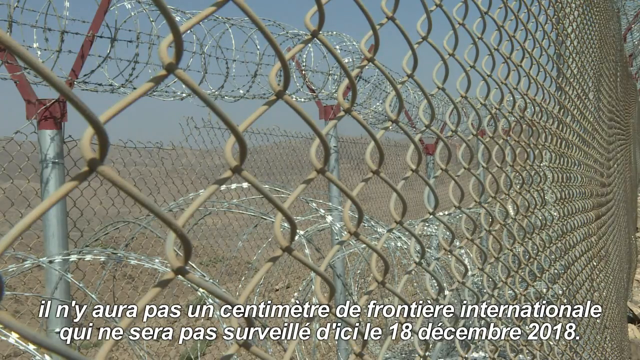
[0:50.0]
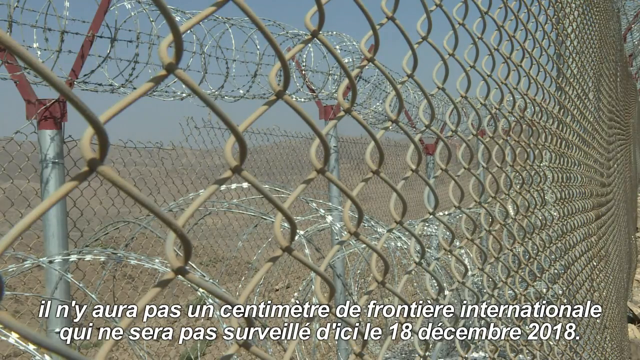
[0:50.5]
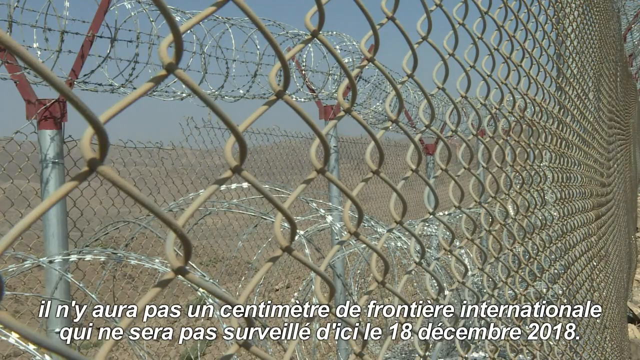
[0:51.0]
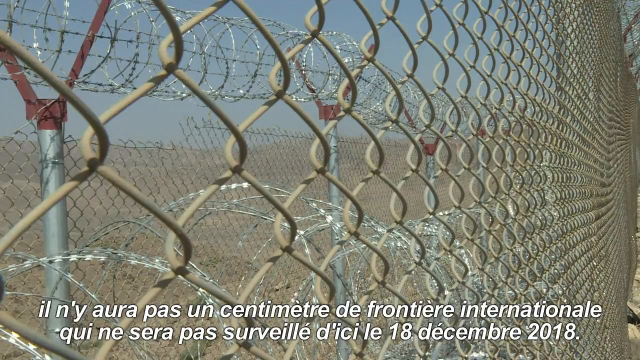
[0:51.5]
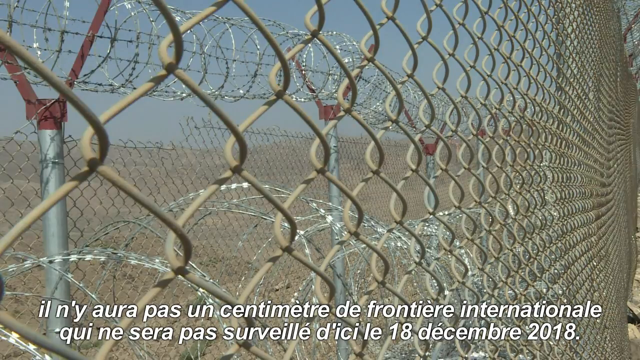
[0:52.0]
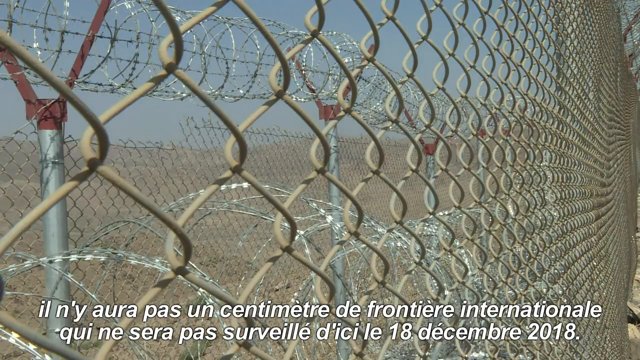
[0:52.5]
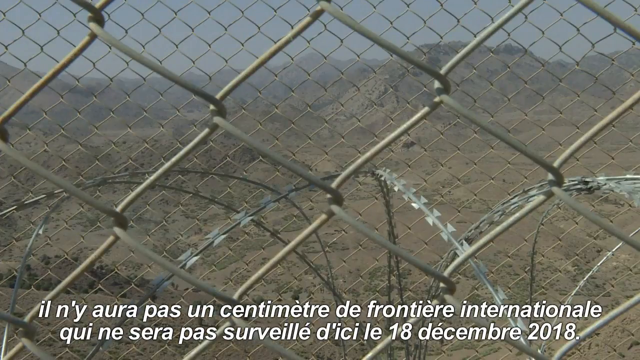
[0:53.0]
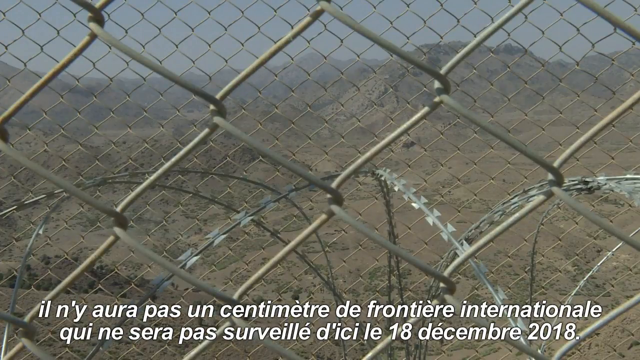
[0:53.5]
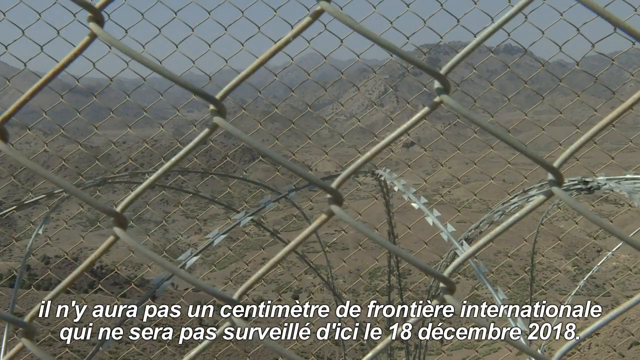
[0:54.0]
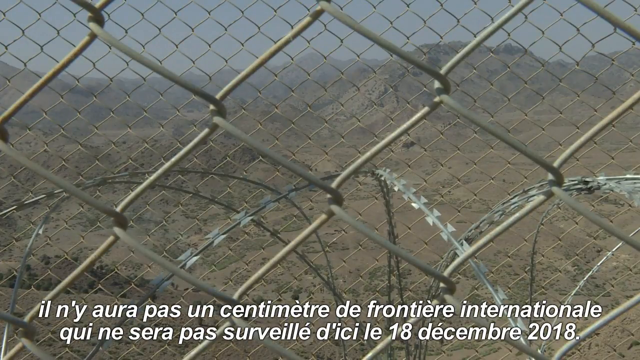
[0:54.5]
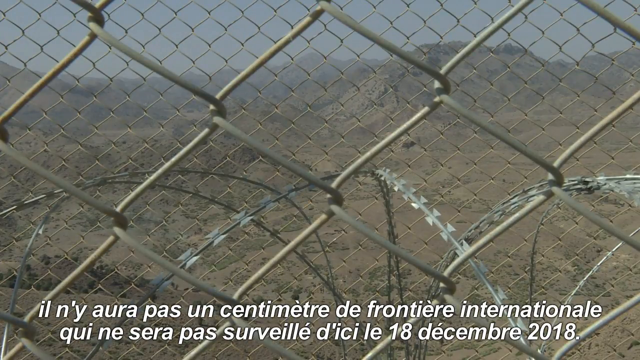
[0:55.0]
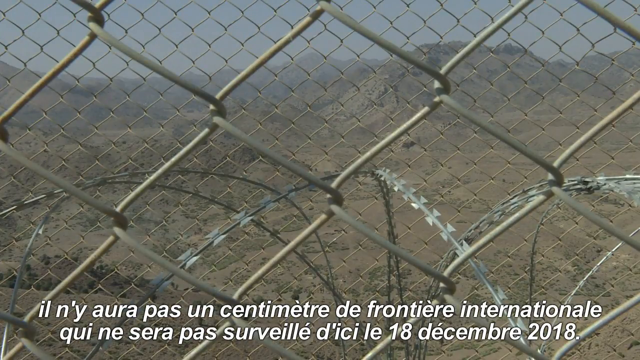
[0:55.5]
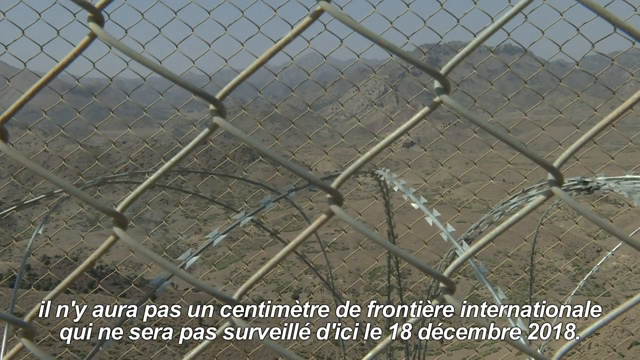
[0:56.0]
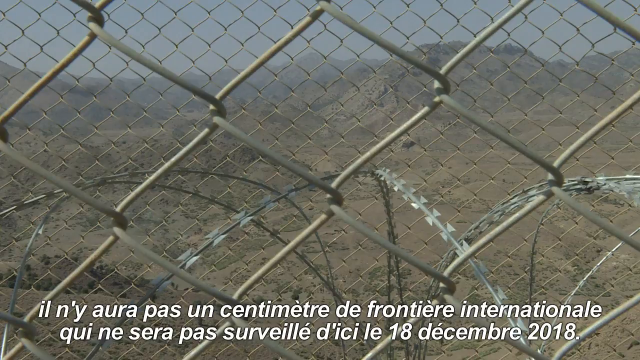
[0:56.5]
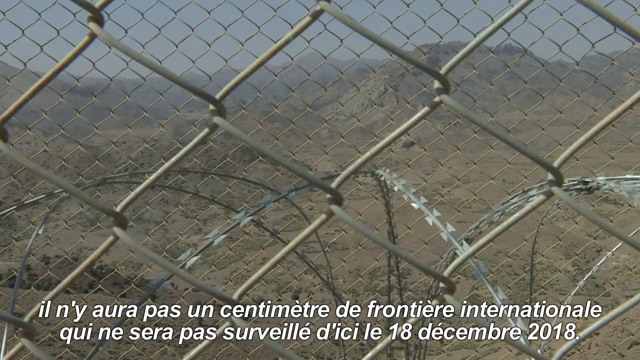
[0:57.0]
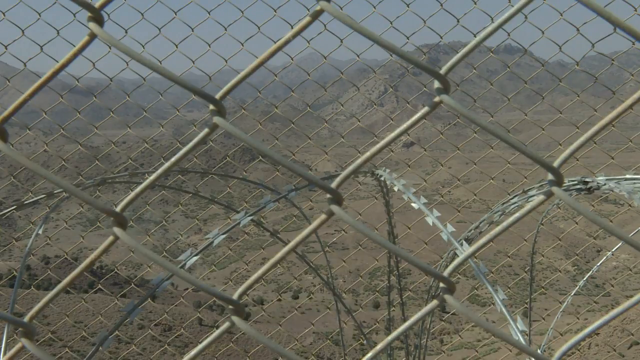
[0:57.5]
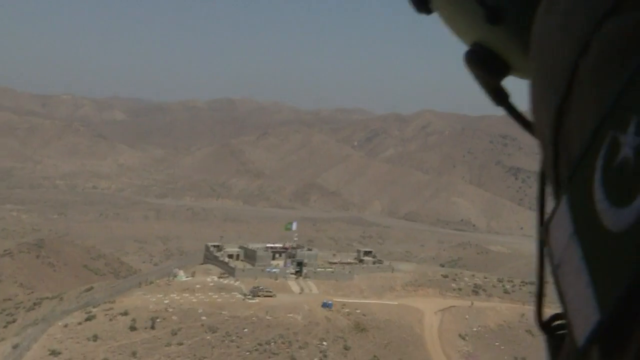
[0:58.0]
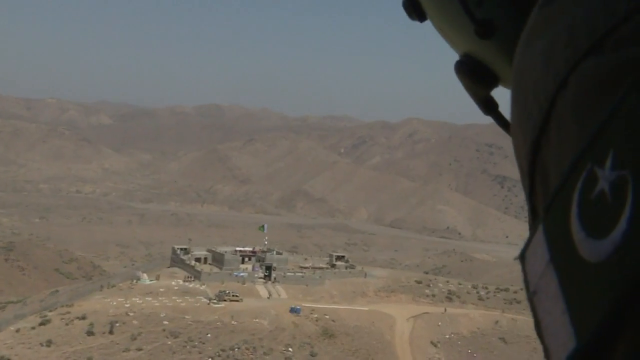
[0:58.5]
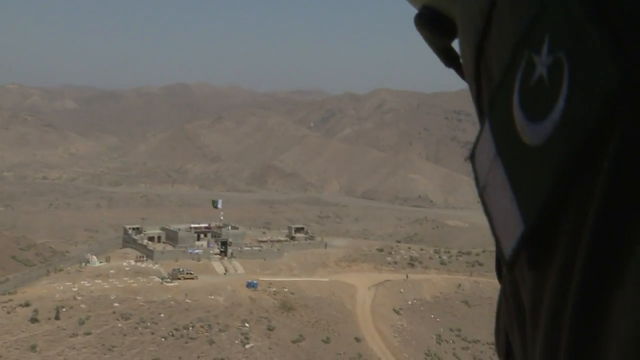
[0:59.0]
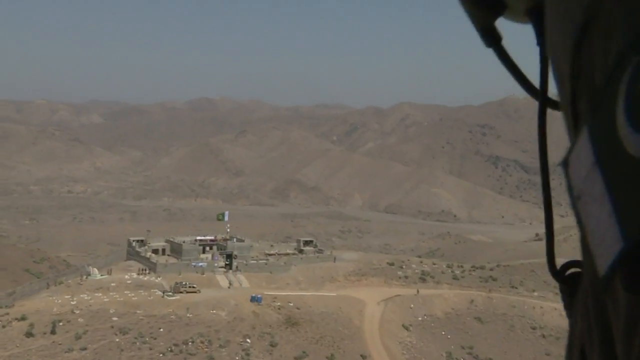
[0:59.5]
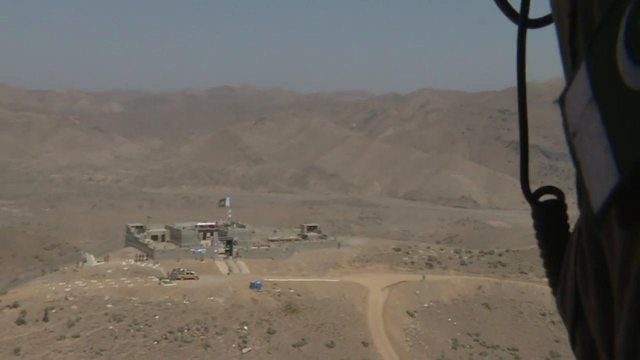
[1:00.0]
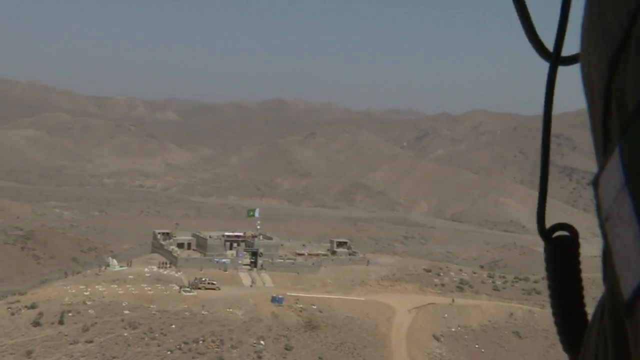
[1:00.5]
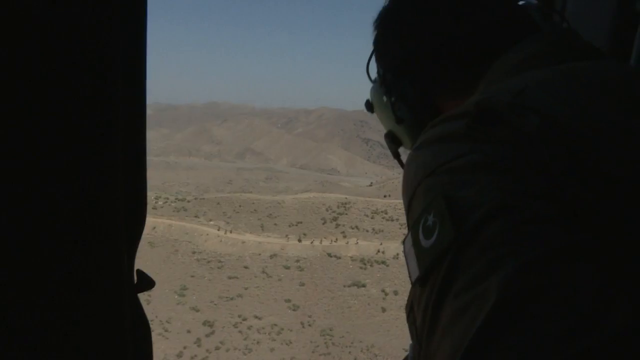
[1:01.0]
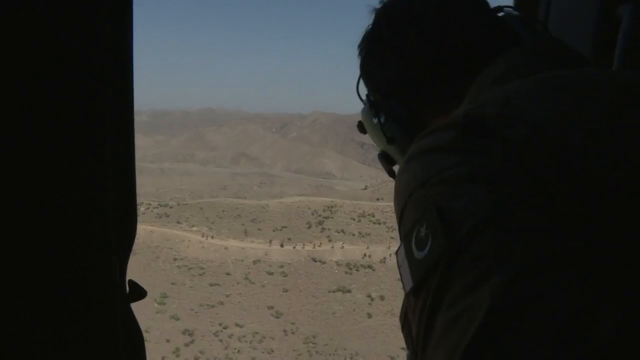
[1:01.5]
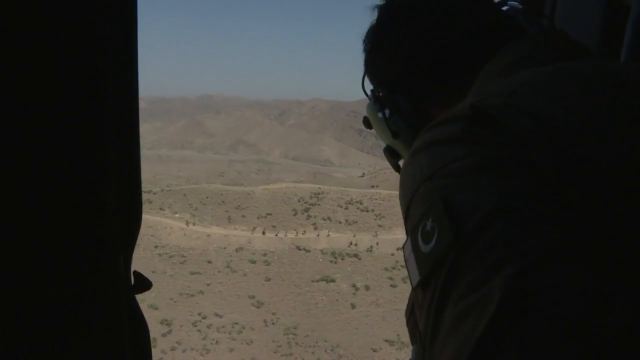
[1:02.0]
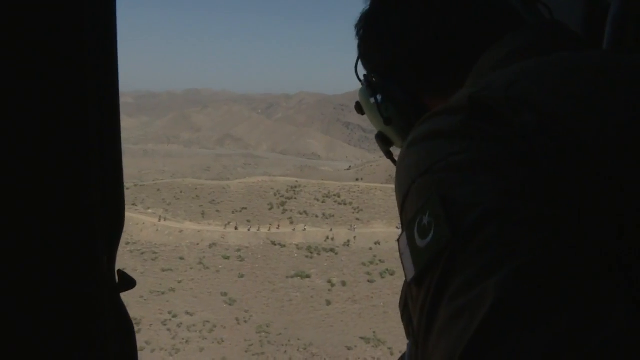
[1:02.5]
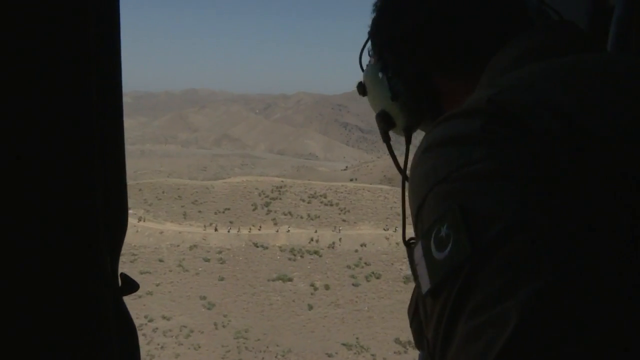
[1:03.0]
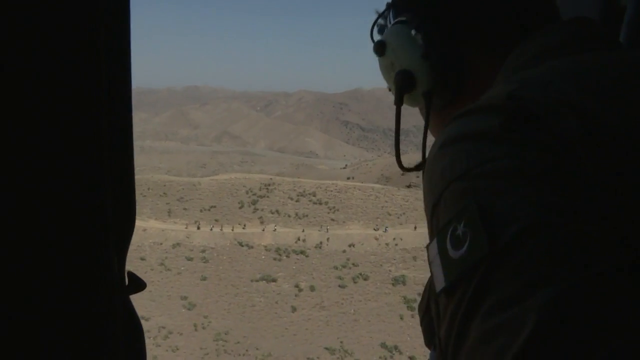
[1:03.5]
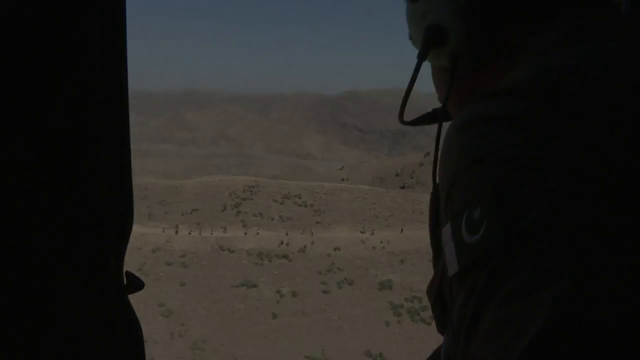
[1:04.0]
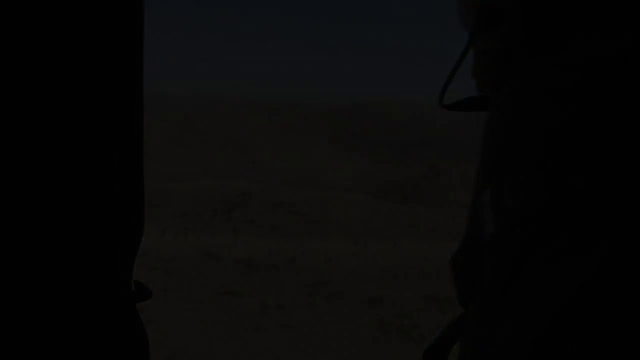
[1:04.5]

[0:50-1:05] There are many types of barbed wire and fences. A road is visible, apparently leading to another camp, and there are a lot of people, who are soldiers. They are moving and walking, possibly being trained, apparently going up the mountain. There is a lot of movement. The soldiers apparently carry guns.